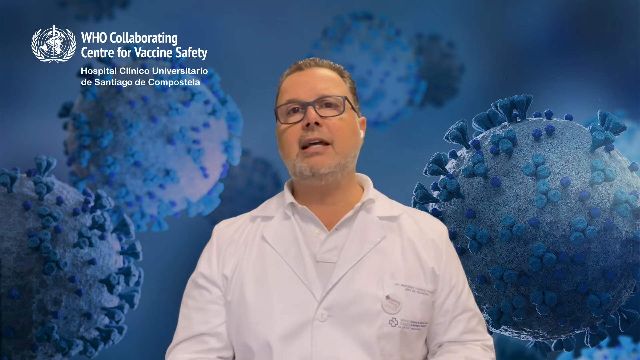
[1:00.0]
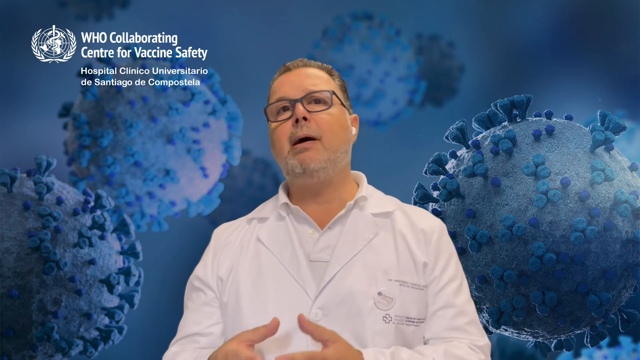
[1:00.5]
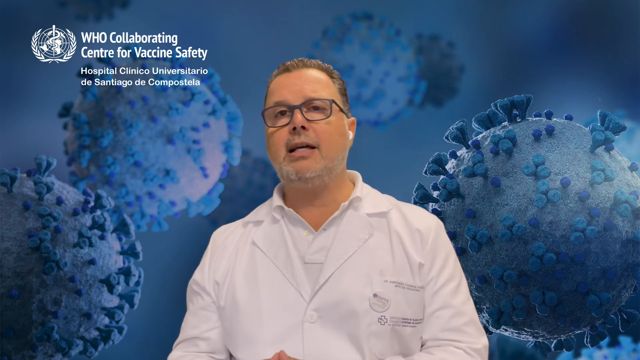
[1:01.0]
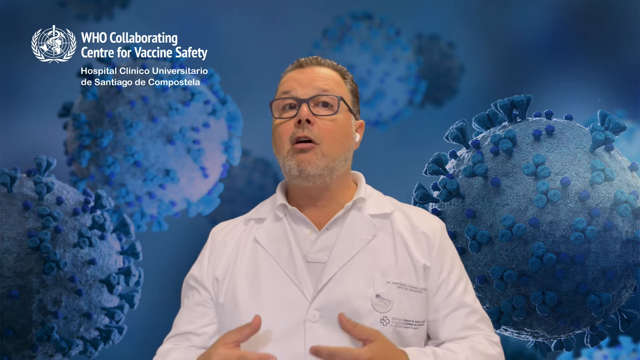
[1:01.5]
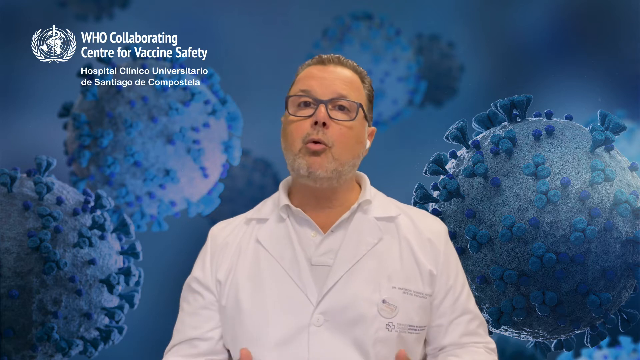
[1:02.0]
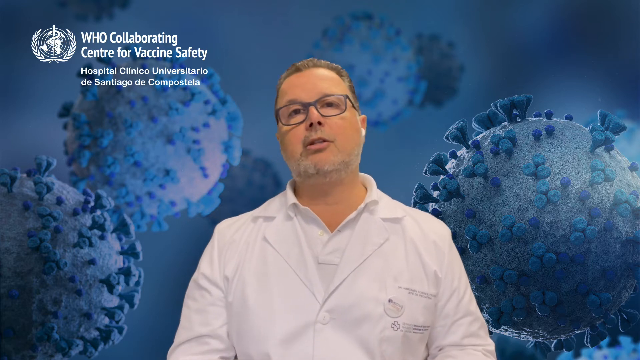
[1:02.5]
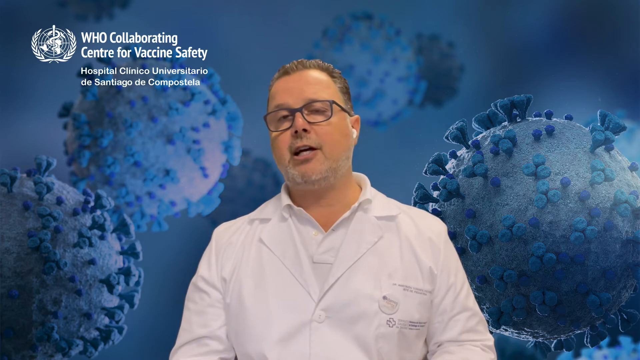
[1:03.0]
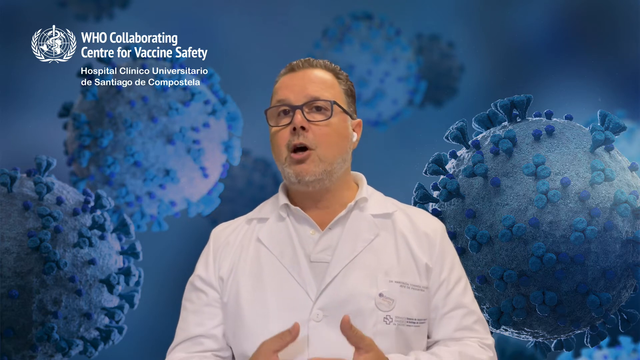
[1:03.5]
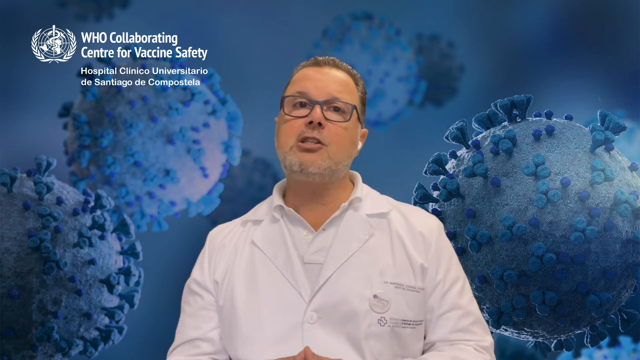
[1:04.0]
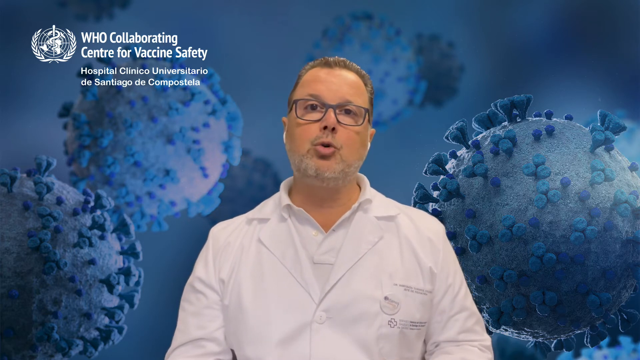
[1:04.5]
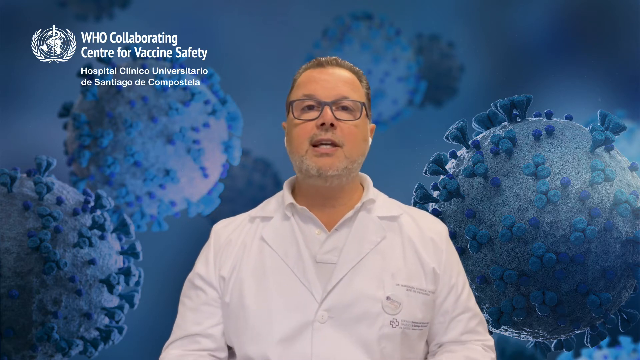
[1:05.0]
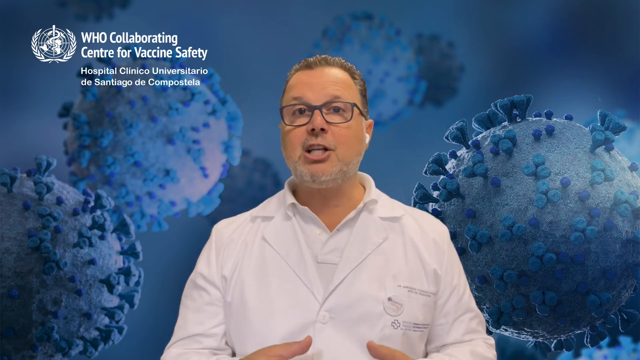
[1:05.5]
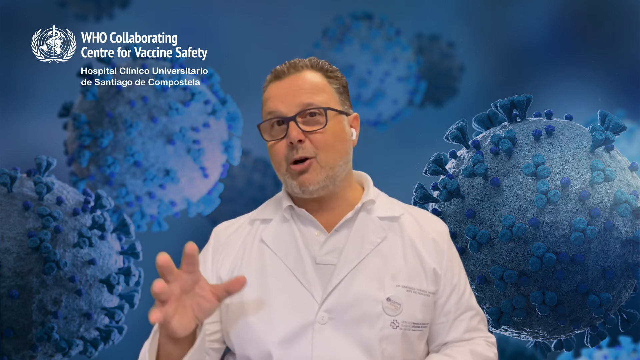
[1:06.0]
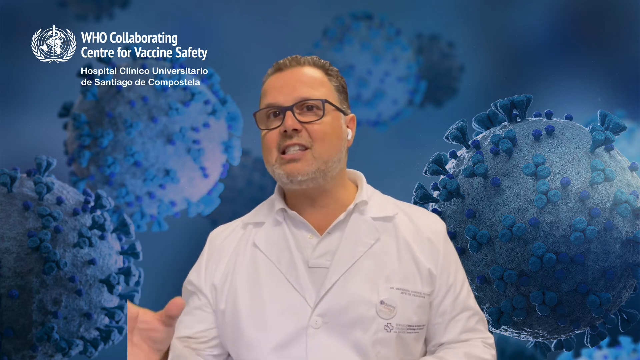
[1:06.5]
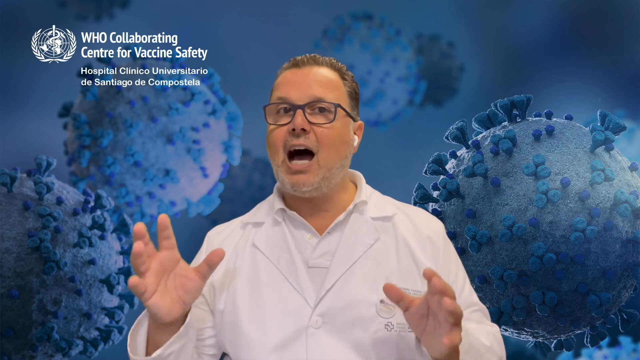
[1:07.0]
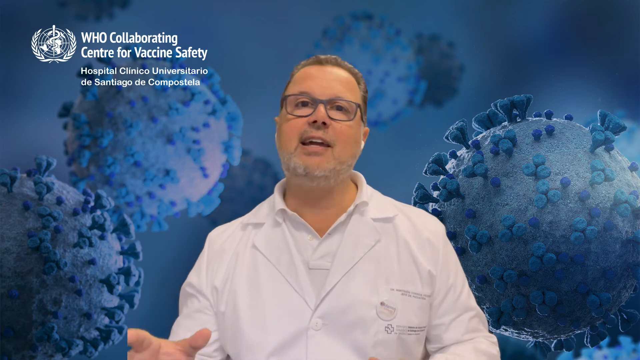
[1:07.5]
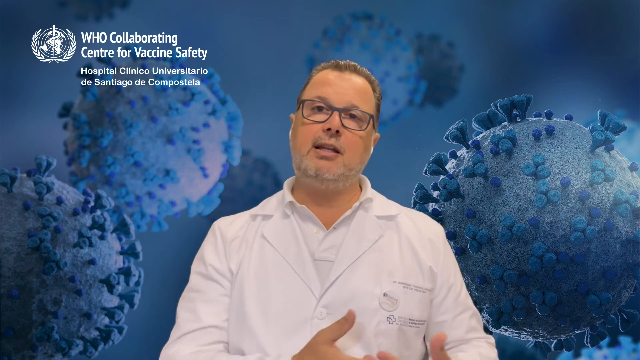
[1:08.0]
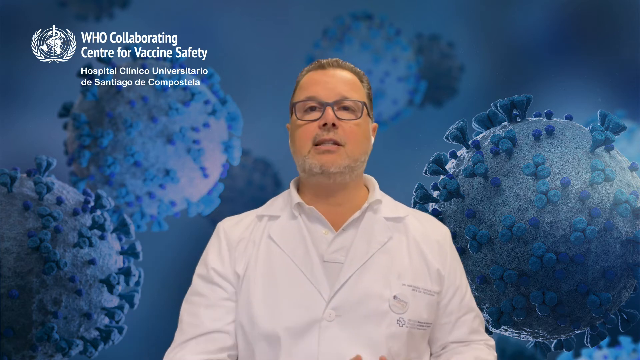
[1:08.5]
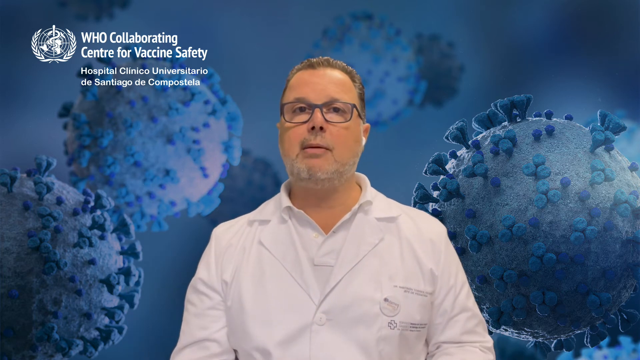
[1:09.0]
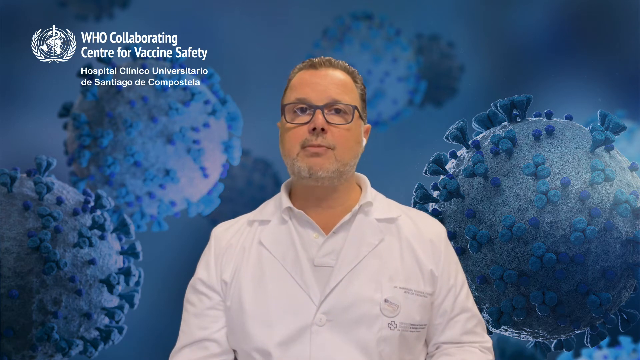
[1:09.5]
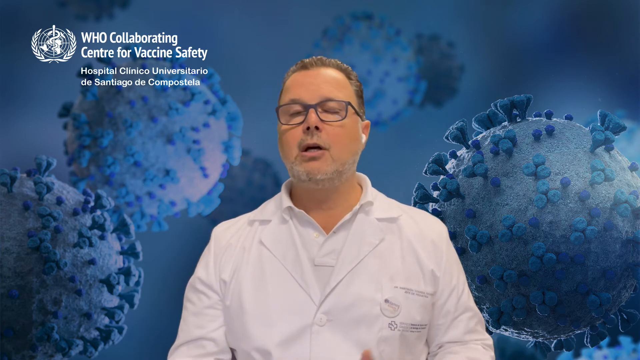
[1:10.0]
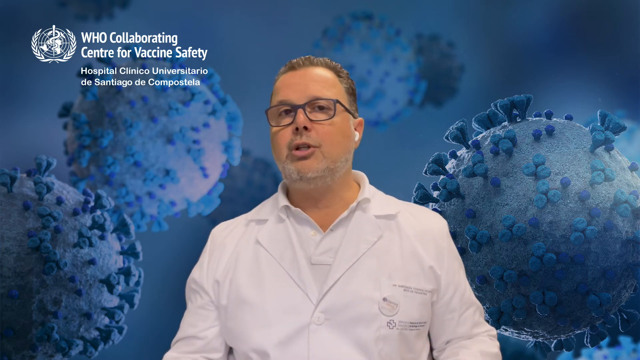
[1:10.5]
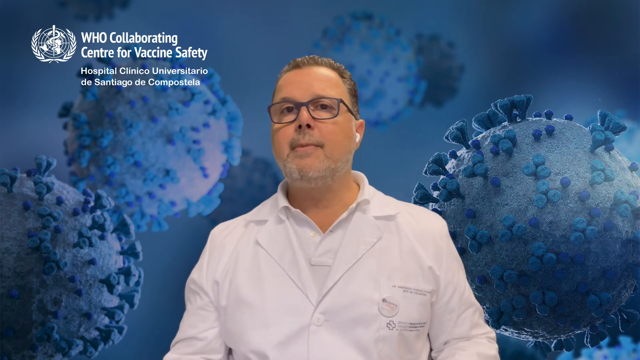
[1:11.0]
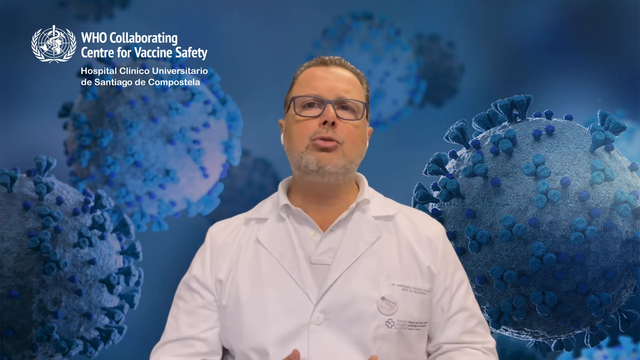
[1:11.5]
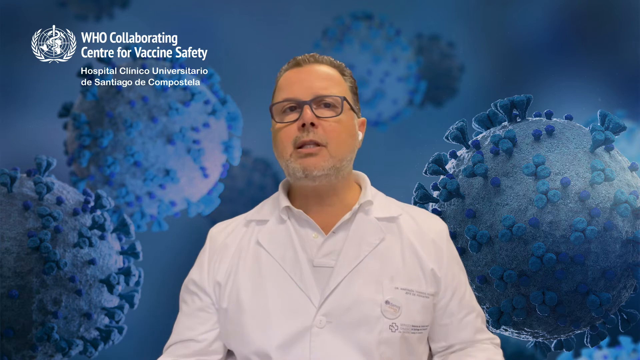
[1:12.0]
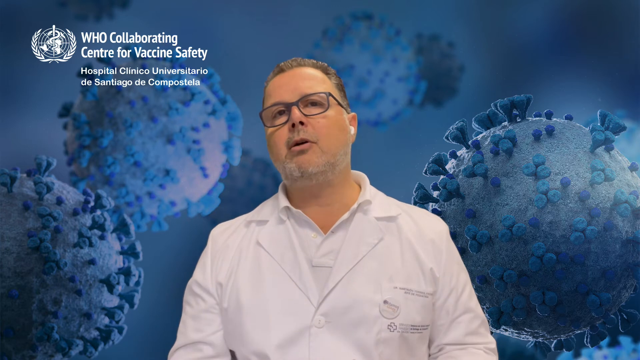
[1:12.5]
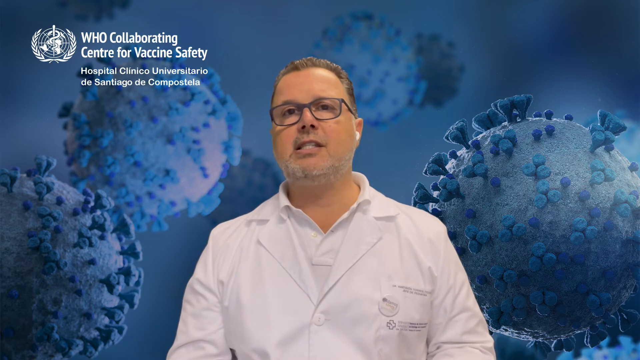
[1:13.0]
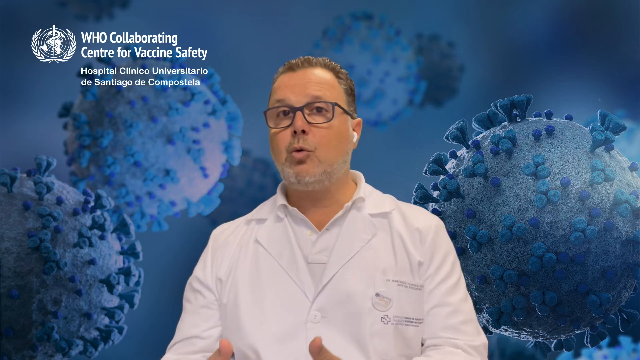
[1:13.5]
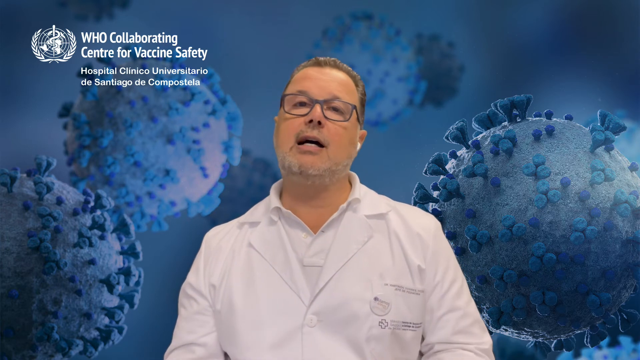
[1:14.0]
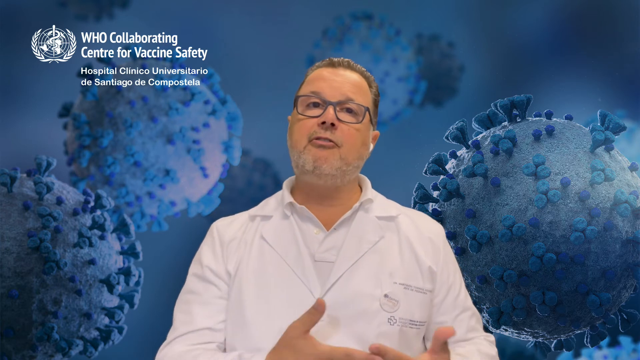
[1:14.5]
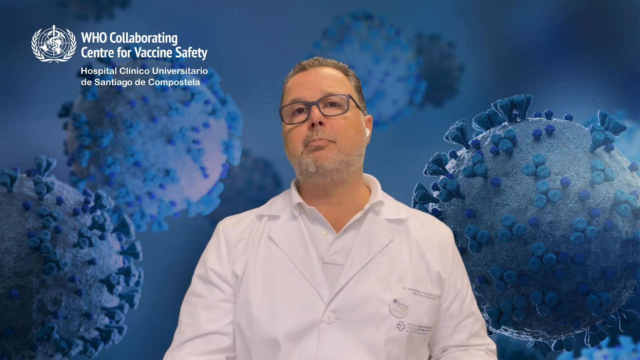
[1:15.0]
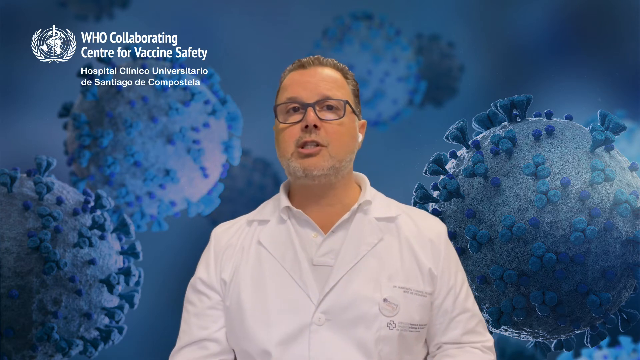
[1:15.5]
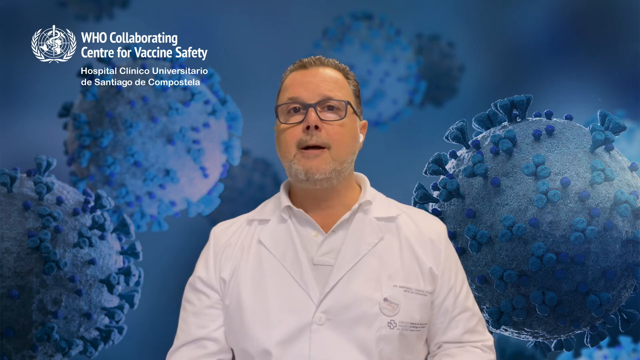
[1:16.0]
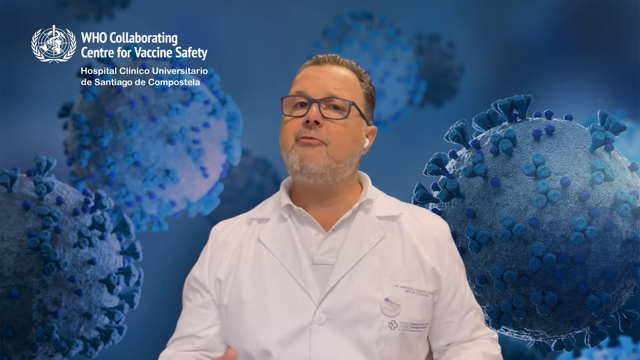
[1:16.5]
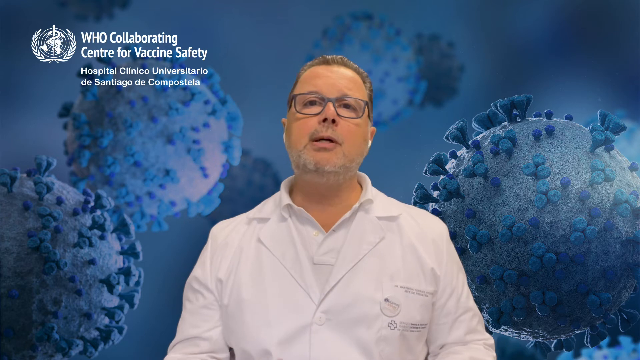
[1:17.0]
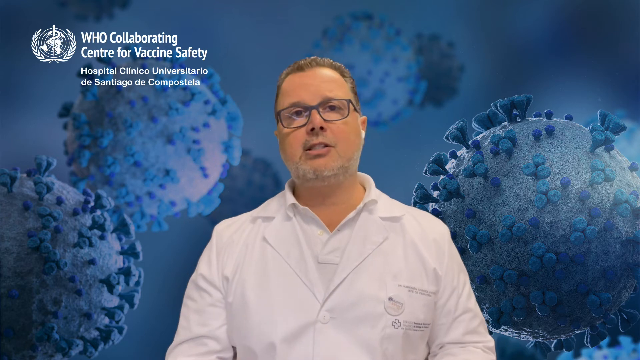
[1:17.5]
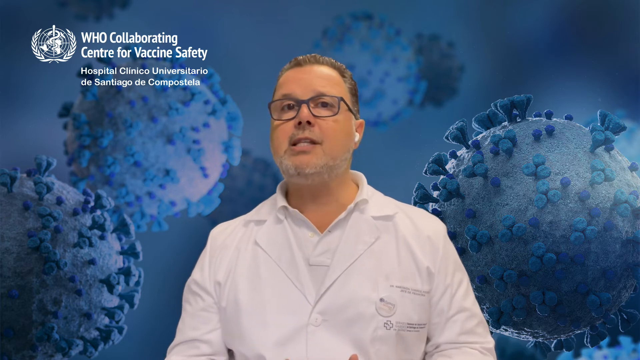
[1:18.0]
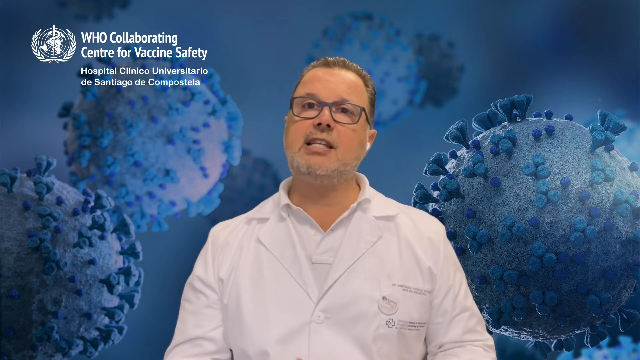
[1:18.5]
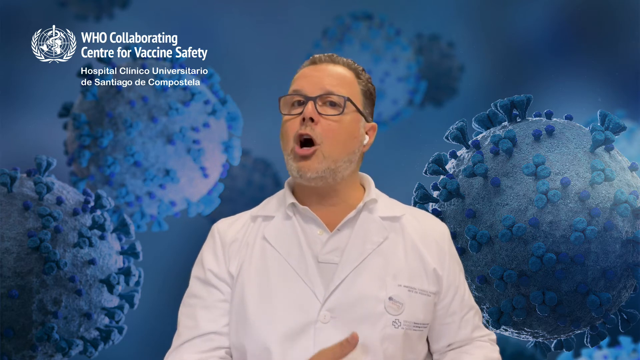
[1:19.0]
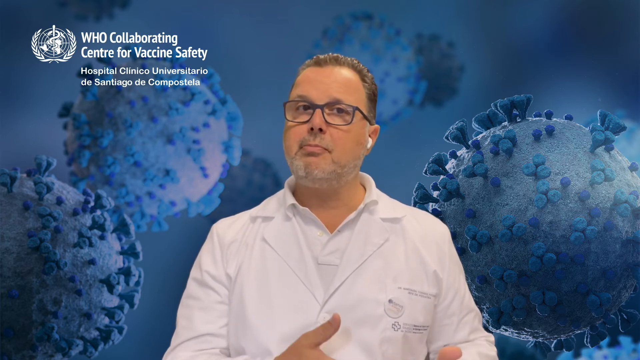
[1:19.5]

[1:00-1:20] The background is blue, with eight spherical objects that are supposed to be viruses. In the upper left corner is a white symbol, with the white text "WHO Collaborating Center for Vaccine Safety" to its right and, below that in smaller white text, "Hospital Clinico Universitario de Santiago de Compostela". In the center is a man wearing a white lab coat, a white shirt, a white earpiece in his left and right ear, and black glasses, facing the viewer. He moves his hand in front of his chest and stomach as he speaks and moves his head to the right. He raises his right hand higher while continuing to speak, then moves it back toward the left side of his body. His face becomes animated, then more relaxed, then animated again as he moves both hands in front of his chest and stomach area.